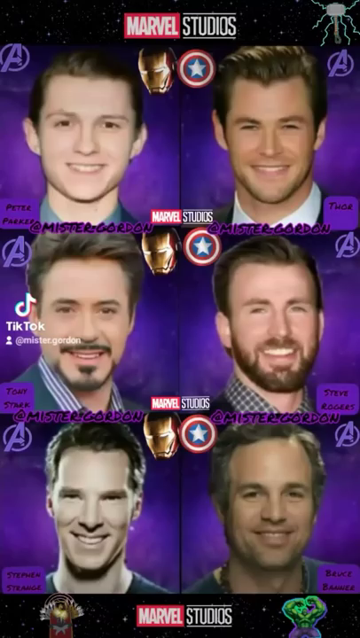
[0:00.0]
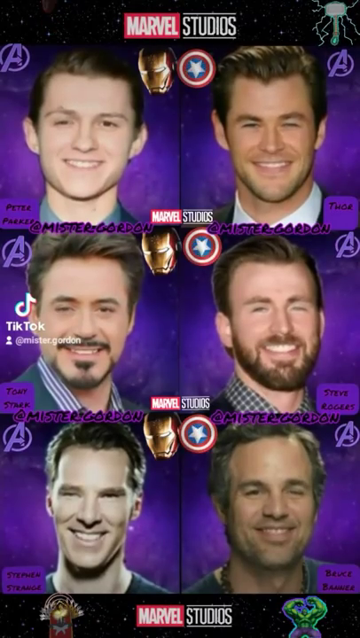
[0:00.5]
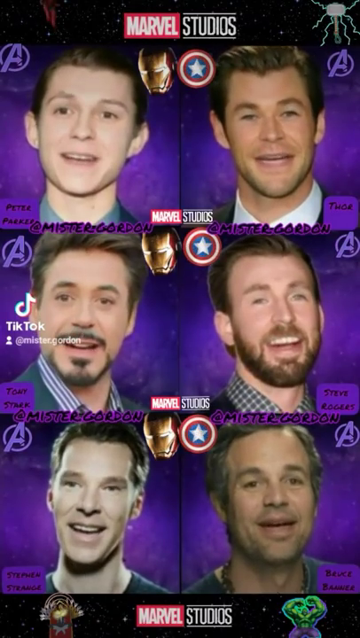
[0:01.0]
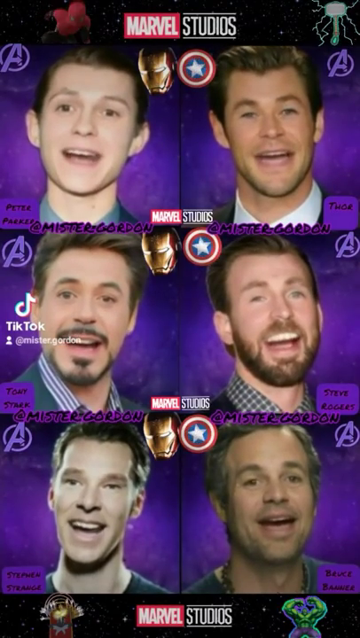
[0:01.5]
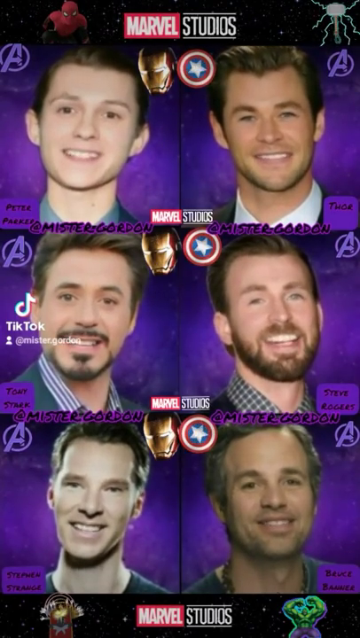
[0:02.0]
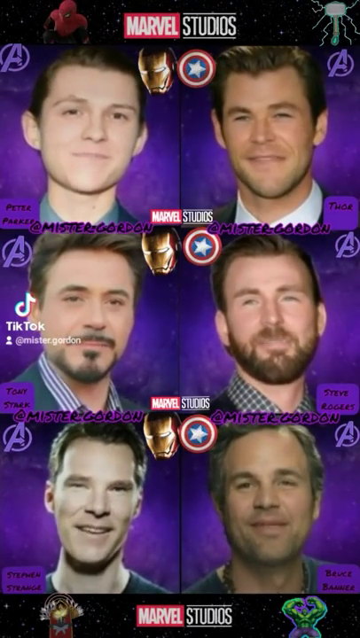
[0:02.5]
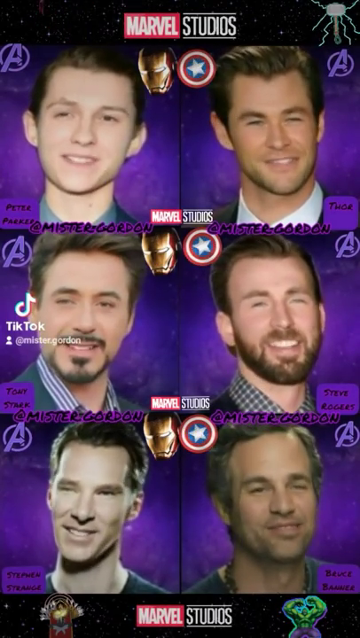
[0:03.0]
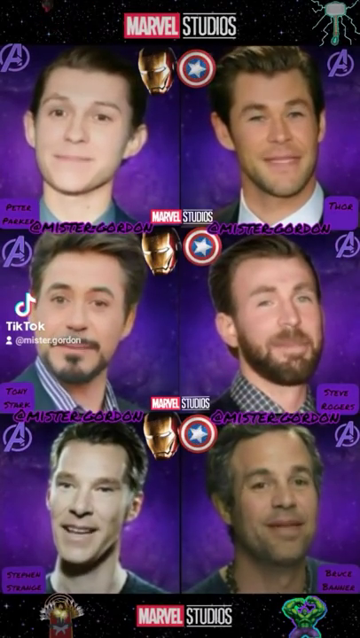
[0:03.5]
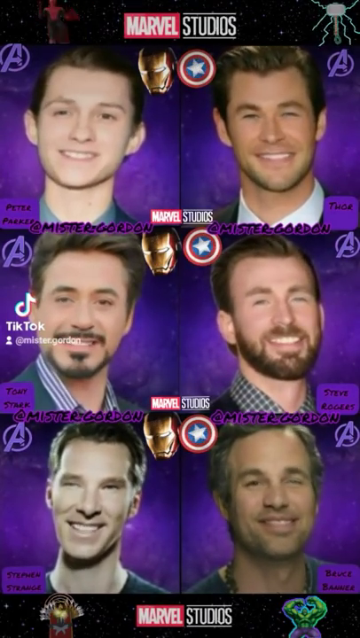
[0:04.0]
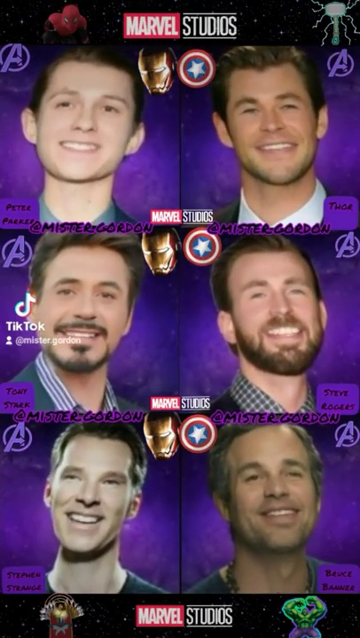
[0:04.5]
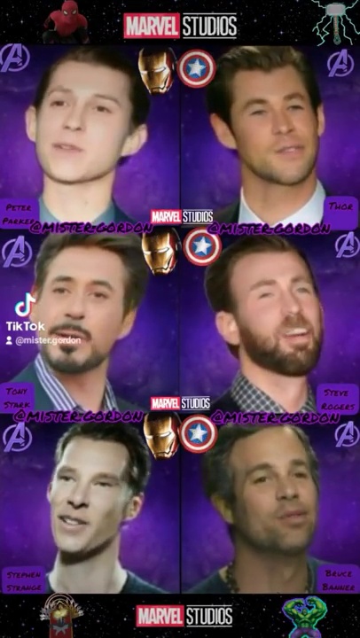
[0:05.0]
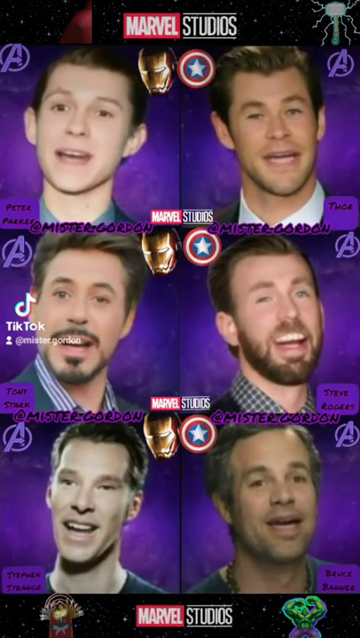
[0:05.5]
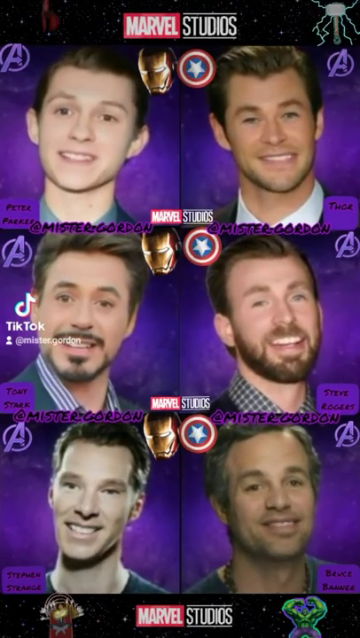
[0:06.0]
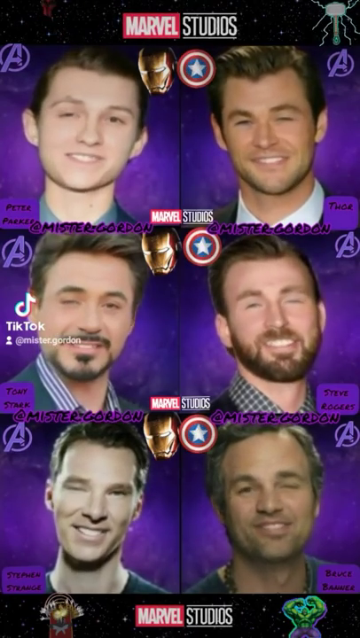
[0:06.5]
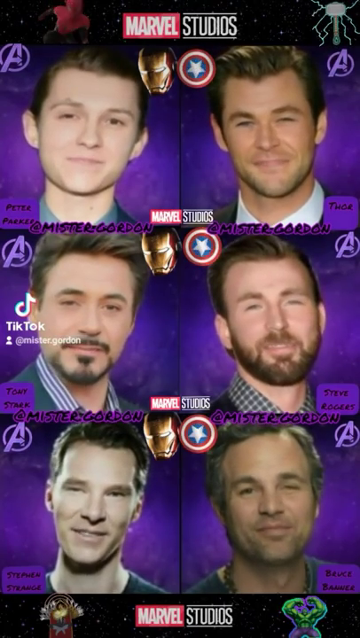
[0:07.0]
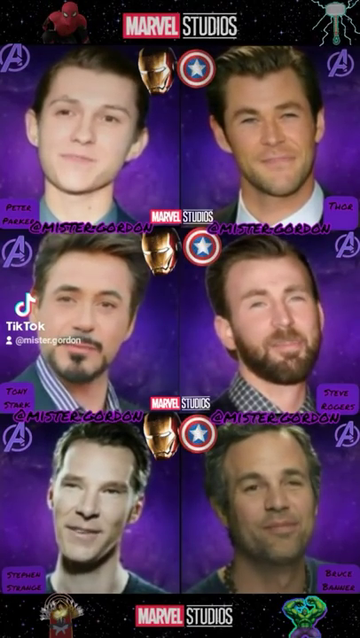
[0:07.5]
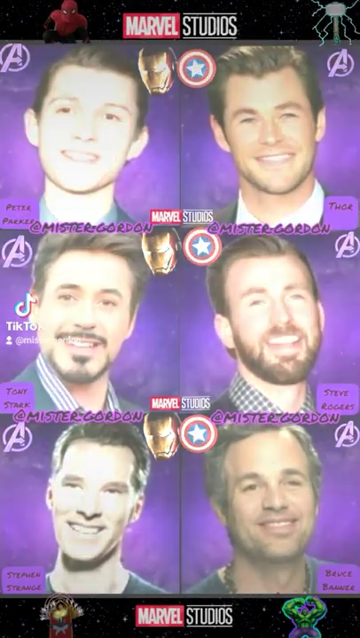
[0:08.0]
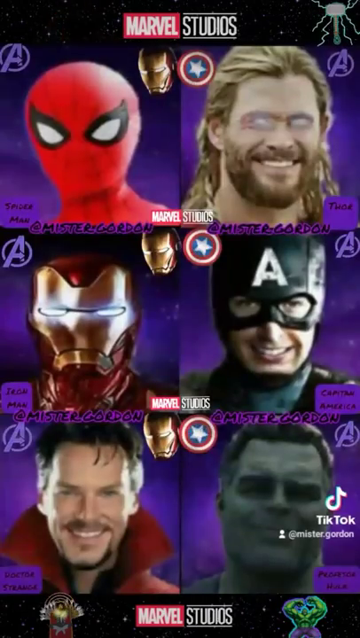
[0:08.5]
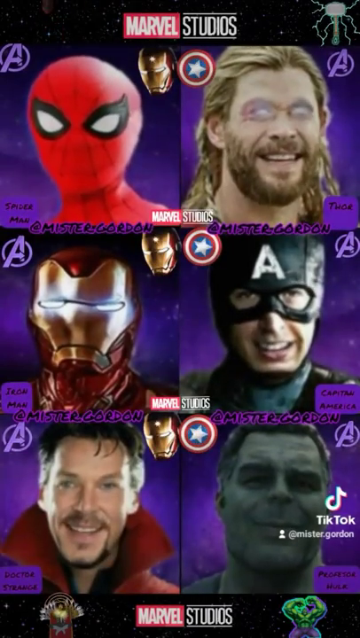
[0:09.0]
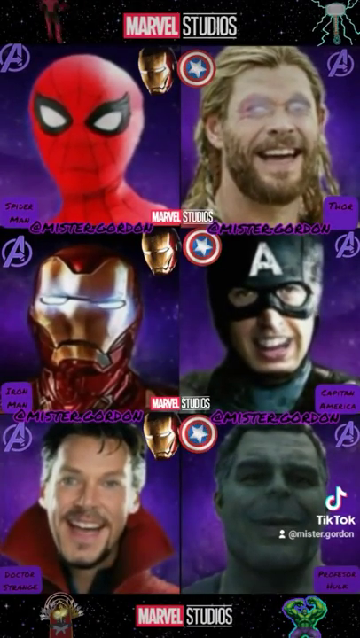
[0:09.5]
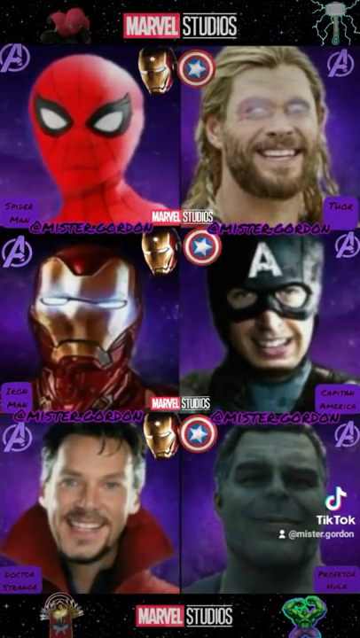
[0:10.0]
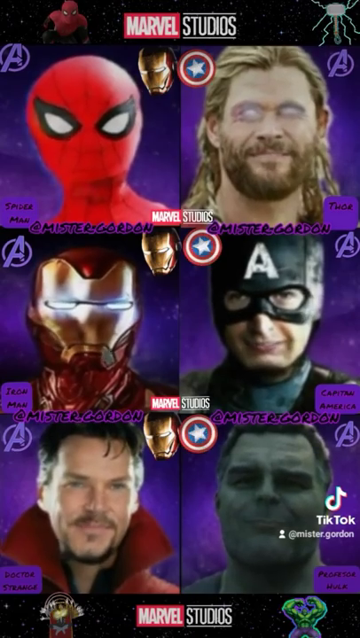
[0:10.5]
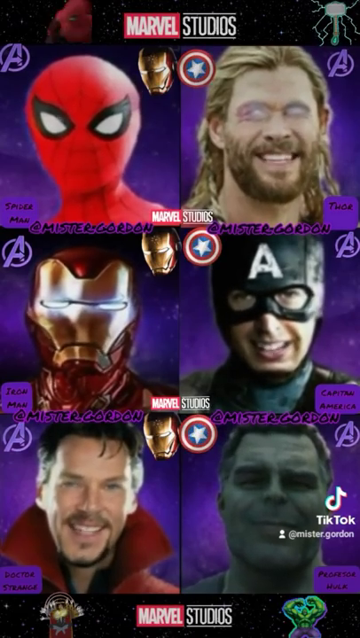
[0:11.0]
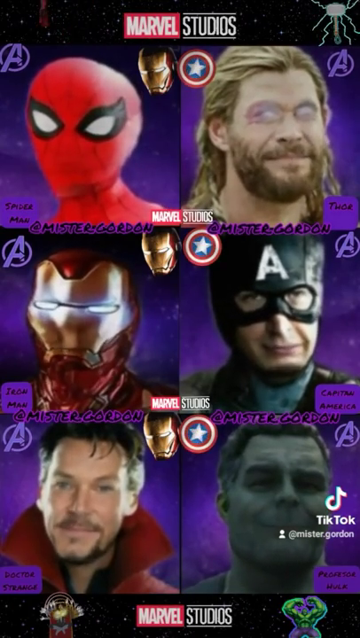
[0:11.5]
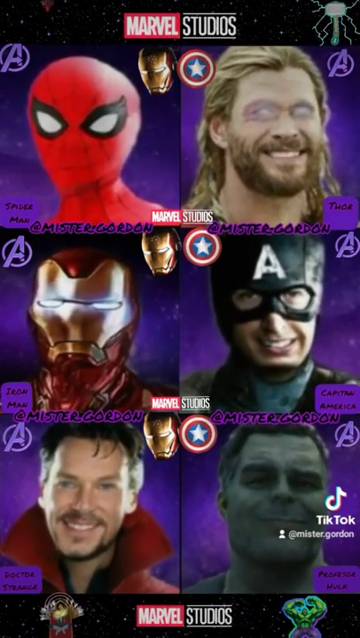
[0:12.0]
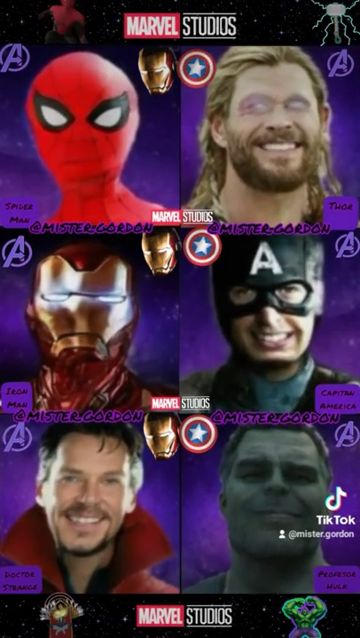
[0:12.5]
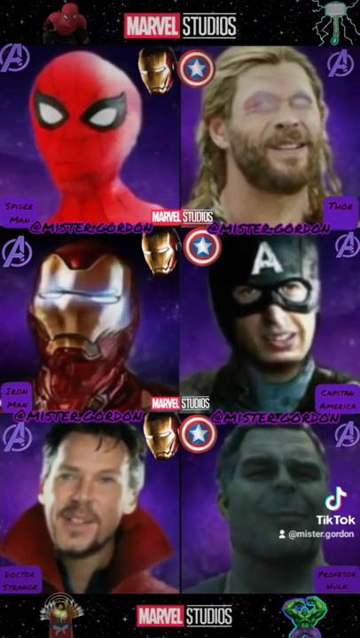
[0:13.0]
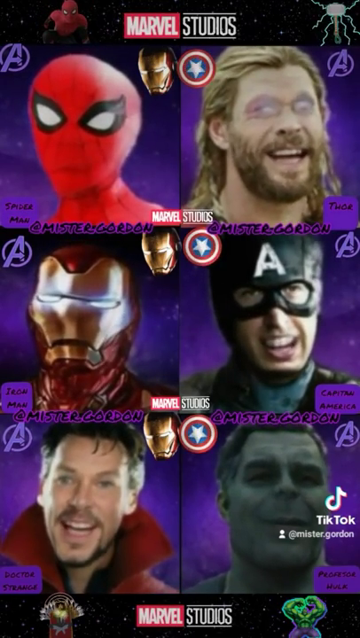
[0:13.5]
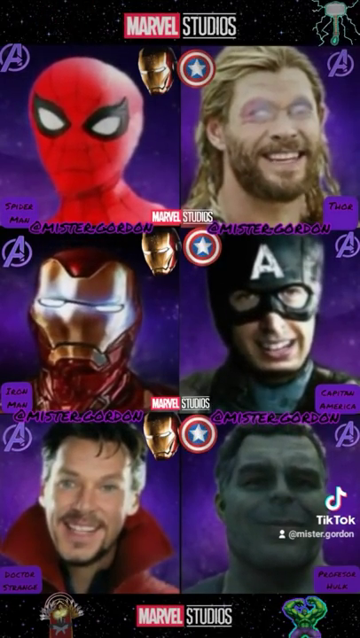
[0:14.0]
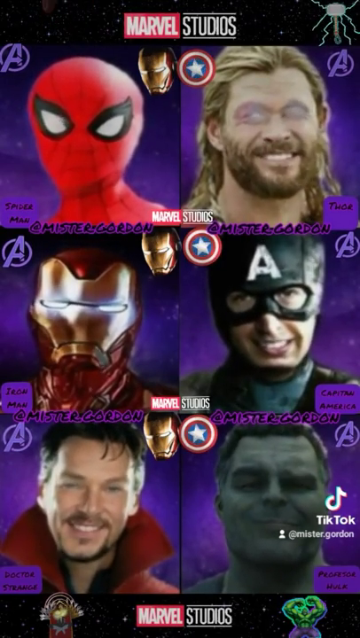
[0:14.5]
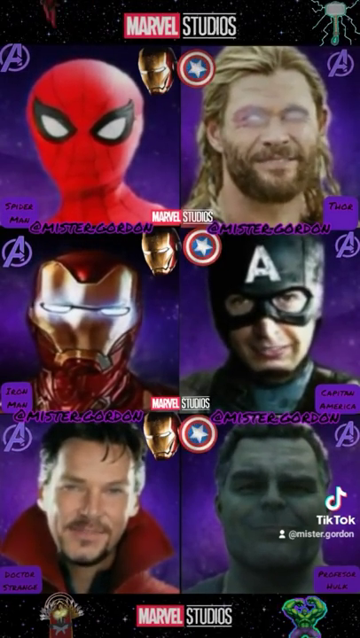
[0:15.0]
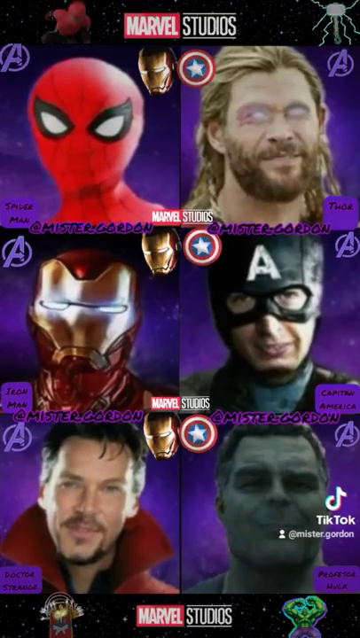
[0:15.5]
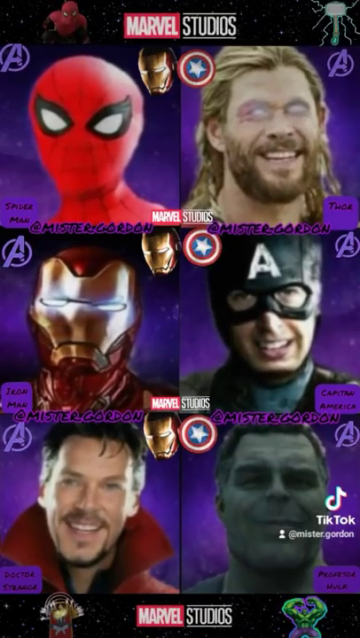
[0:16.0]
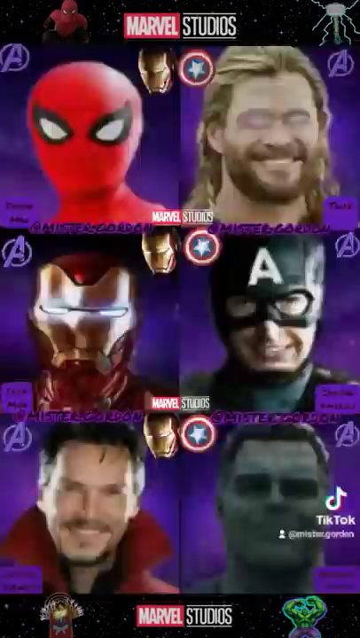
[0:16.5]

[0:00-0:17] What looks like some kind of AI video on TikTok is shown in portrait mode, with the TikTok logo on the left. It has something to do with Marvel: "Marvel Studios" appears at the top. Six different actors from the Avengers movies are arranged in two columns and three rows. On the top left is apparently Tom Holland, and on the right apparently the actor who plays Thor. In the second row is Robert Downey Jr., with the actor who plays Captain America to the right. On the bottom left is a man who is apparently Benedict Cumberbatch, and to the right is the actor who plays the Hulk. They all seem to be singing or talking in sync, which looks a bit odd, as if it is some sort of AI creation. The screen then sort of turns white, and the actors sort of turn into the characters they play in the movies: Spider-Man on the top left, then Thor, then Iron Man, then Captain America, then Doctor Strange on the bottom left and the Hulk on the bottom right. The characters are also sort of talking or singing.